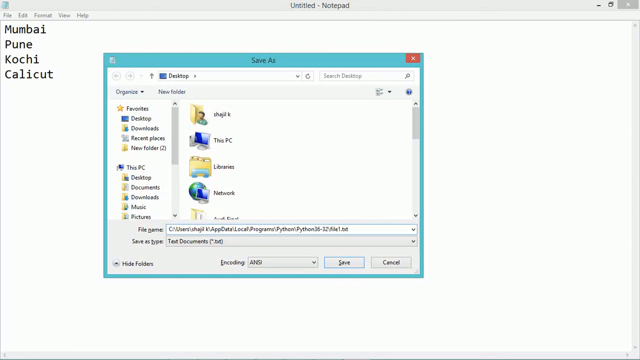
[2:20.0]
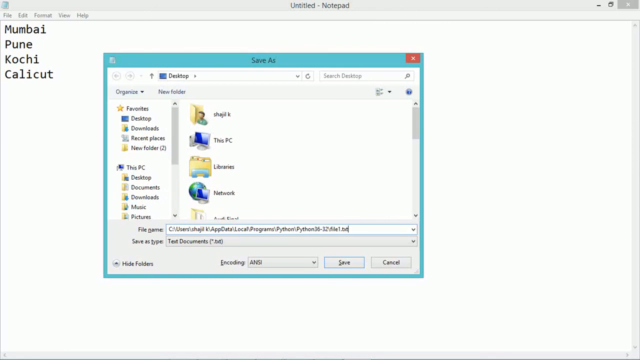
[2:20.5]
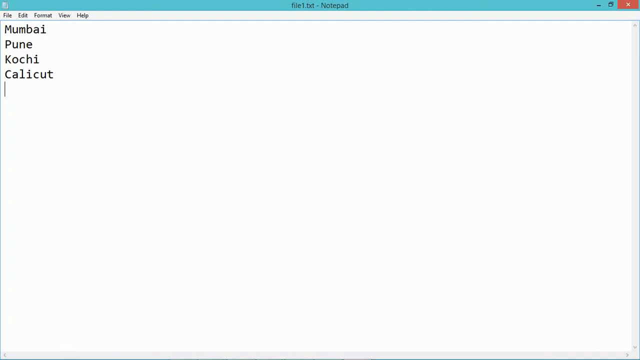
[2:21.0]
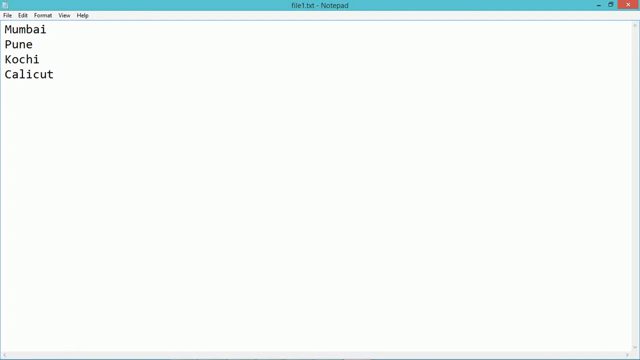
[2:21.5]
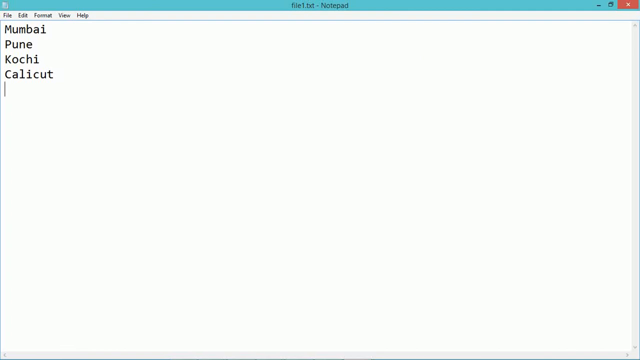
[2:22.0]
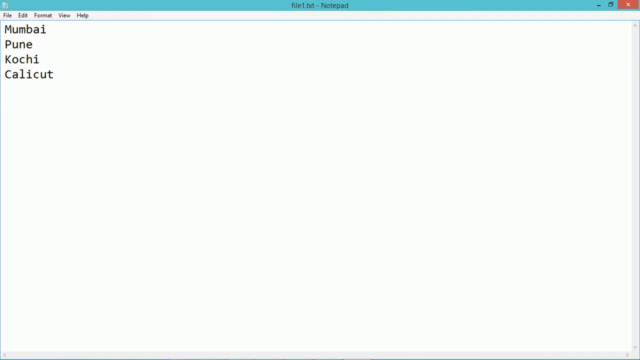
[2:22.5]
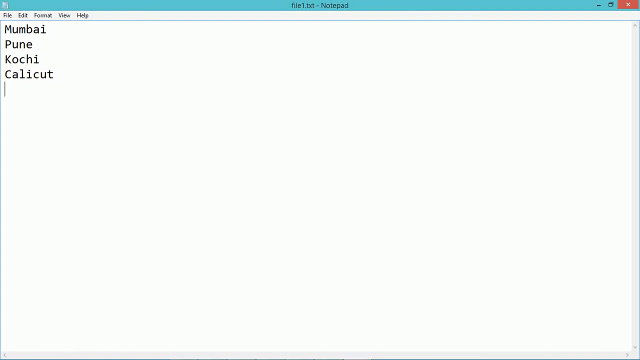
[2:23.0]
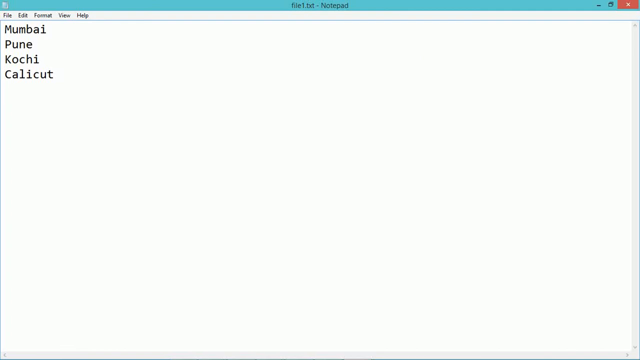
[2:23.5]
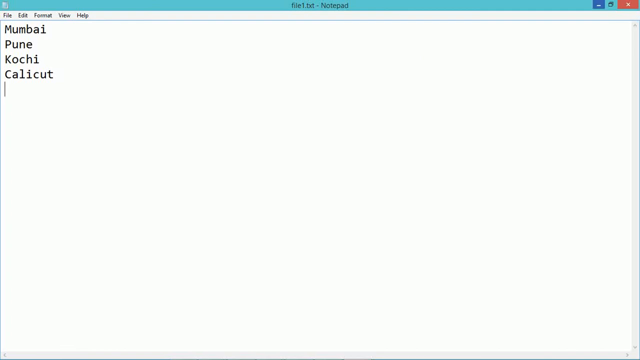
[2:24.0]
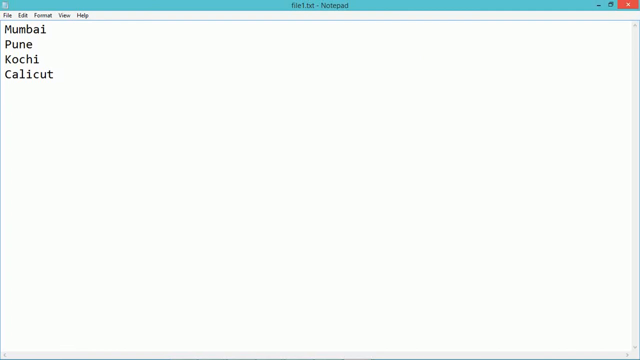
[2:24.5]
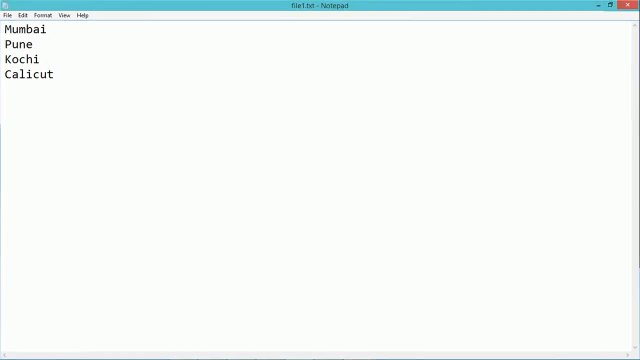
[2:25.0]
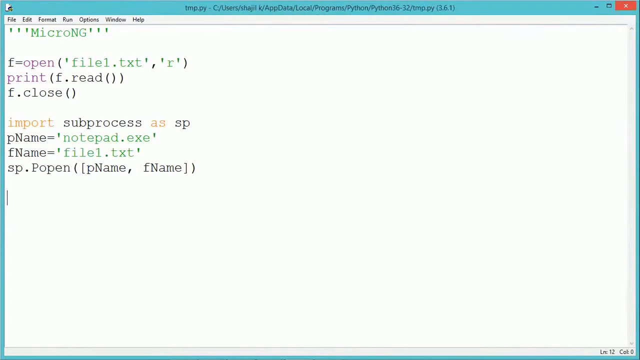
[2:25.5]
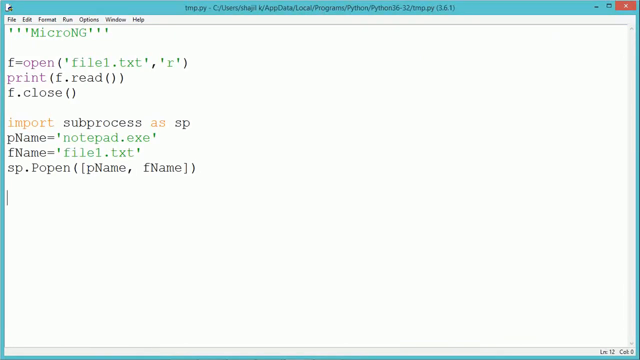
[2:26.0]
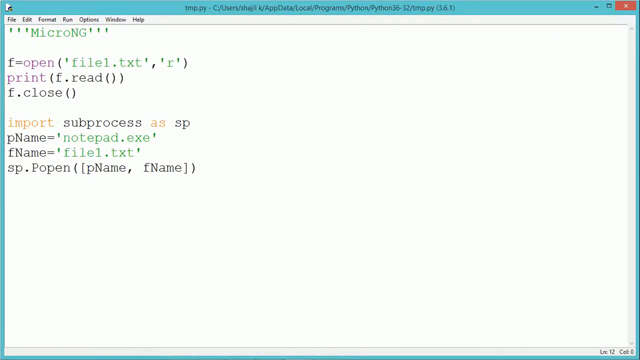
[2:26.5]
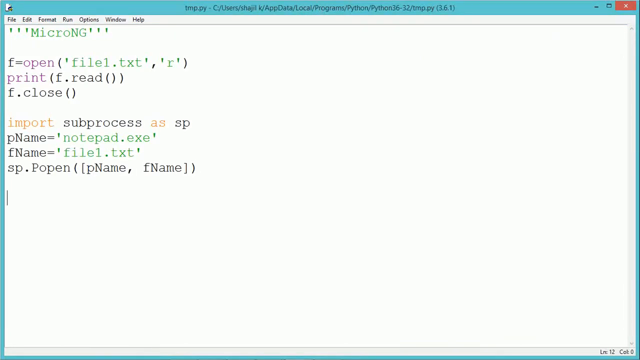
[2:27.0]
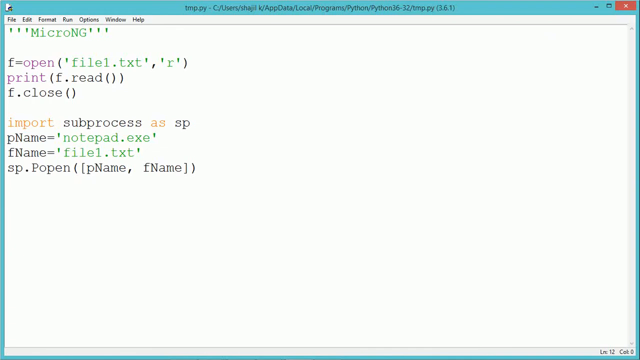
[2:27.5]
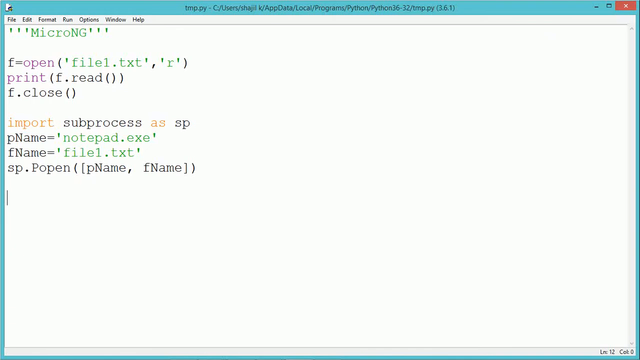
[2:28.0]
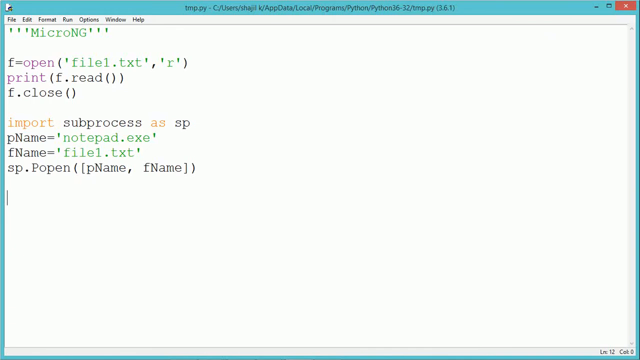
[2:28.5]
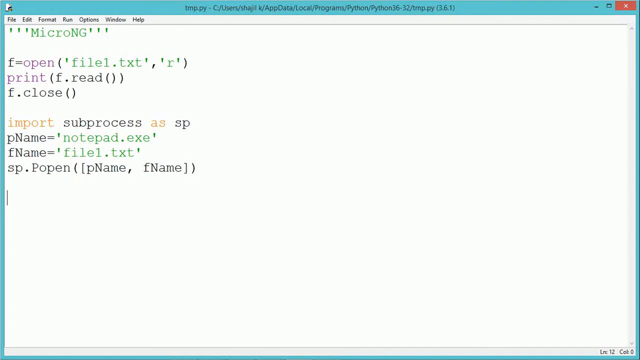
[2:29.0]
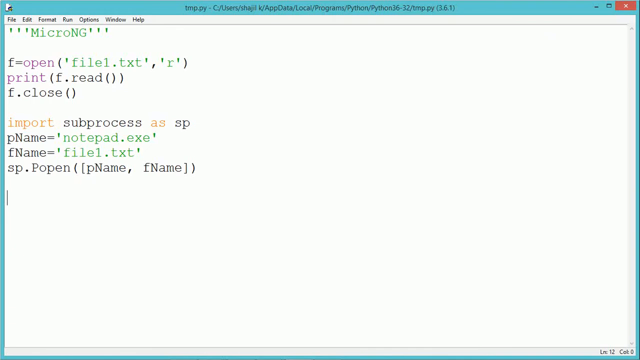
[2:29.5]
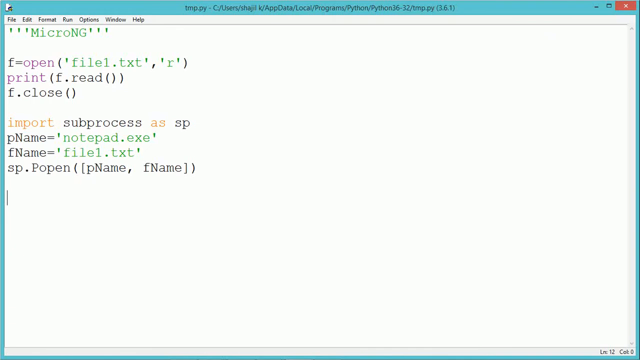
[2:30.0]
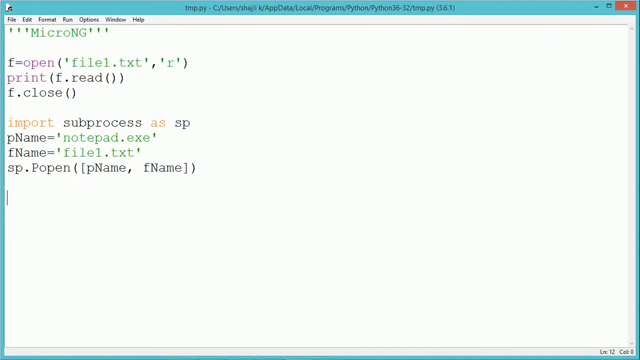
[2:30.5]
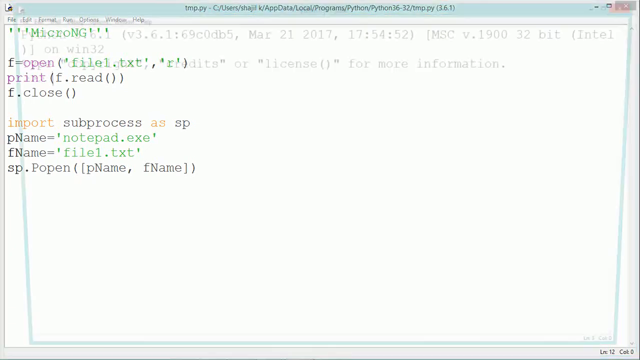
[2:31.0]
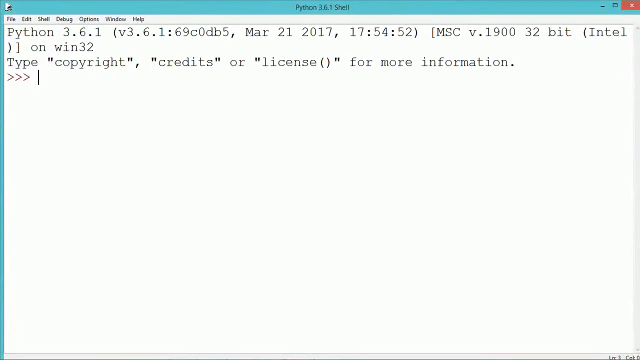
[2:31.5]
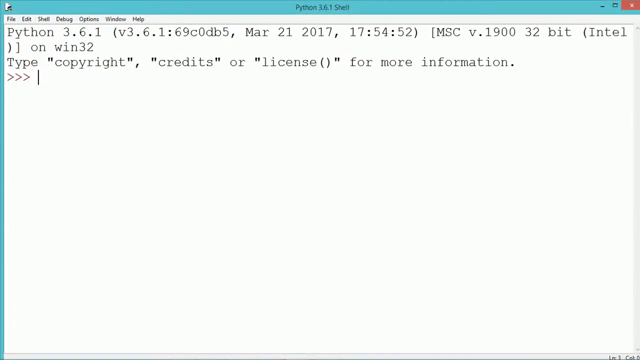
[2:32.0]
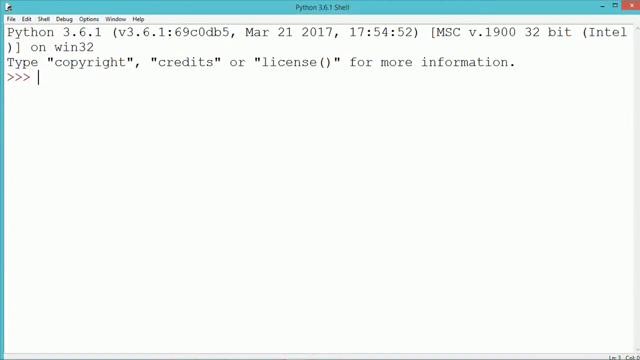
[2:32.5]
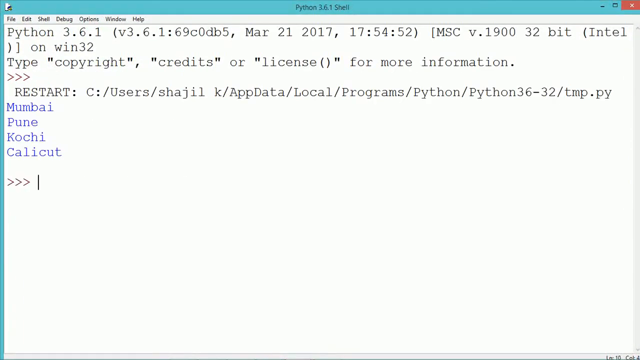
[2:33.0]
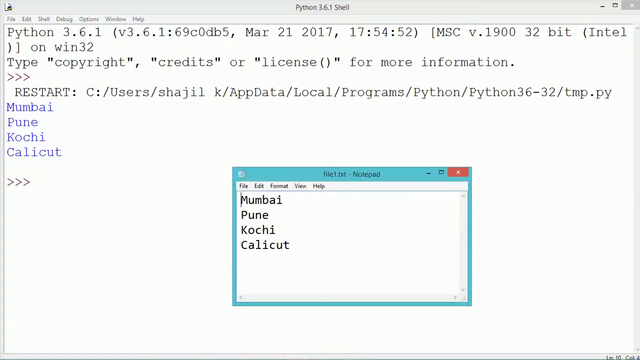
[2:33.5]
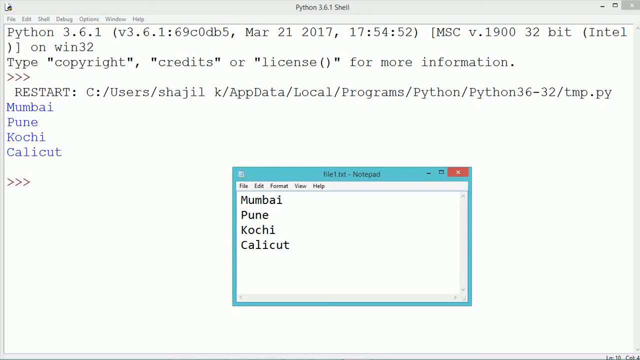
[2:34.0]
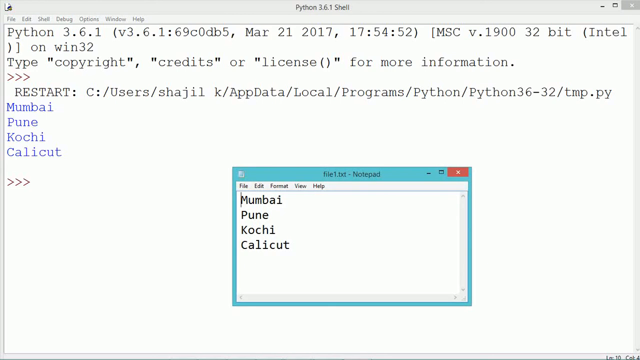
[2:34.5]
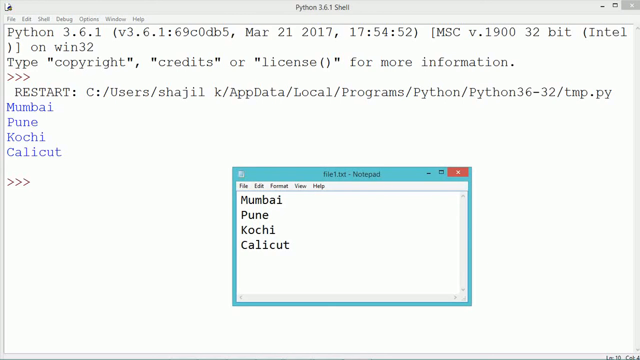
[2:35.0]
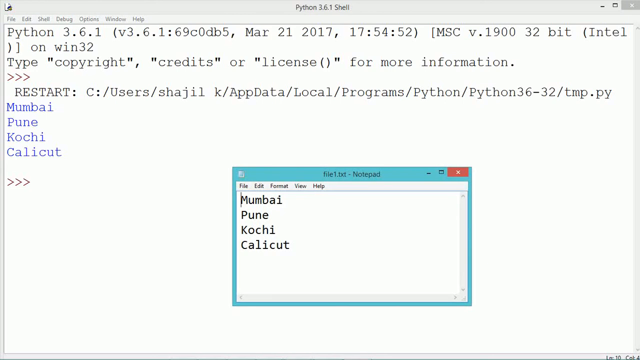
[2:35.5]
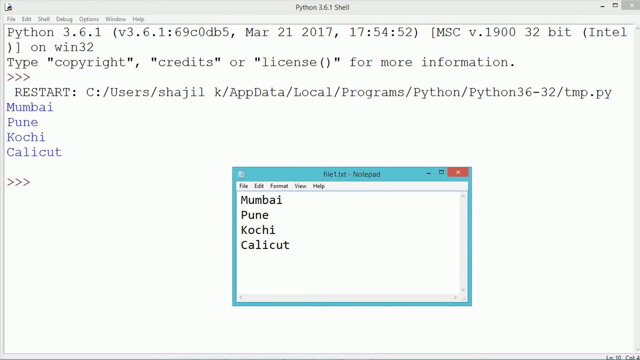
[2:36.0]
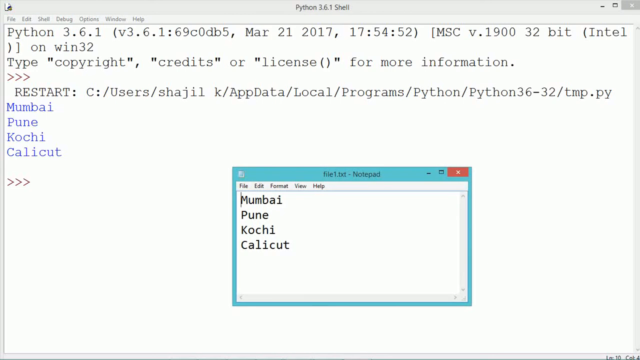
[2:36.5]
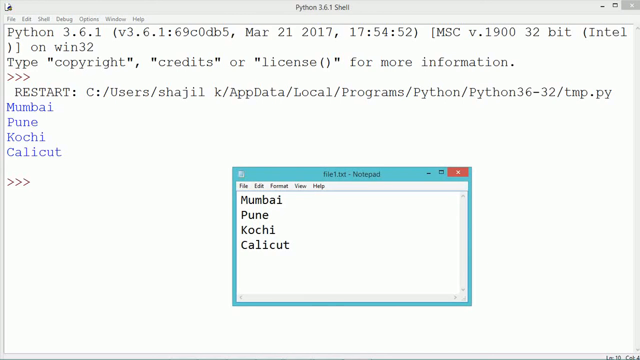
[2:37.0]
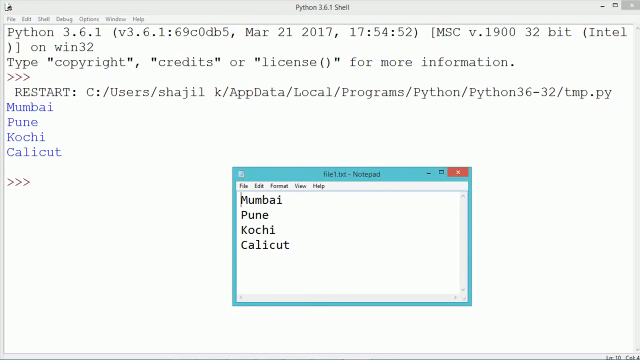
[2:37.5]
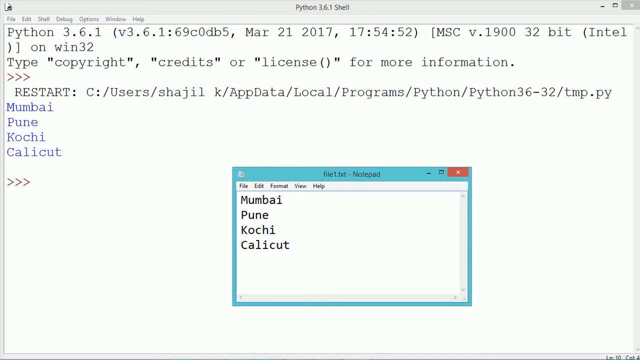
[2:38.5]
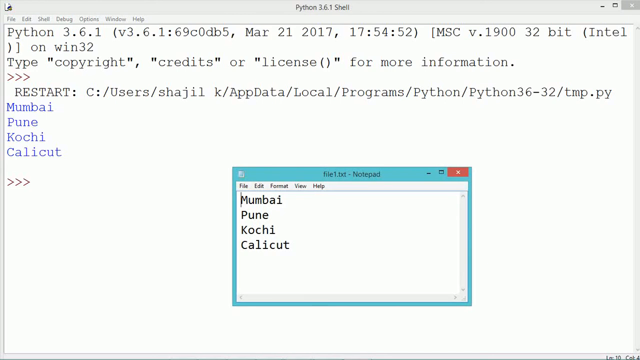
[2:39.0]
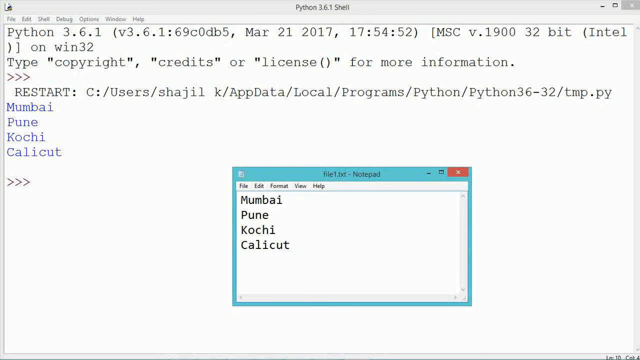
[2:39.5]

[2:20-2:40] The user changes the file name while saving the Notepad file, which is saved as txt with ANSI encoding. The desktop in the save dialog shows a few items: the user's name, a DSPCI icon, Libraries and Network. On the left side are file explorer shortcuts such as Favorites, Desktop, Downloads and Recent Places, along with a New Folder tool. Under DSPCI there are Desktop, Documents, Music and Pictures. At the bottom of the save prompt are two buttons, Save and Cancel. The user saves, closing the pop-up, and the Python program in the compiler is shown. The user runs the program, and a pop-up titled "Python 3.6.1 Shell" shows the results of the program in a separate window.